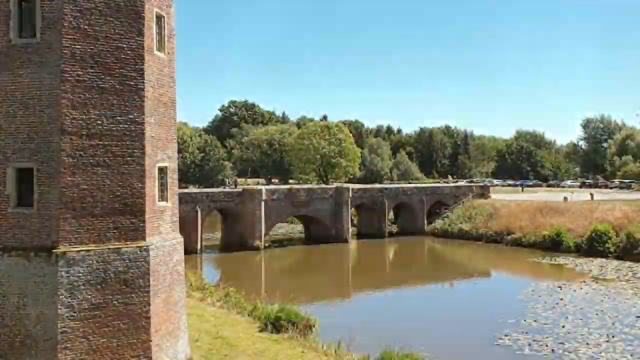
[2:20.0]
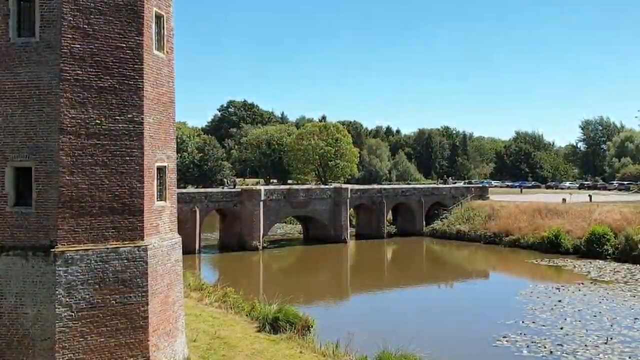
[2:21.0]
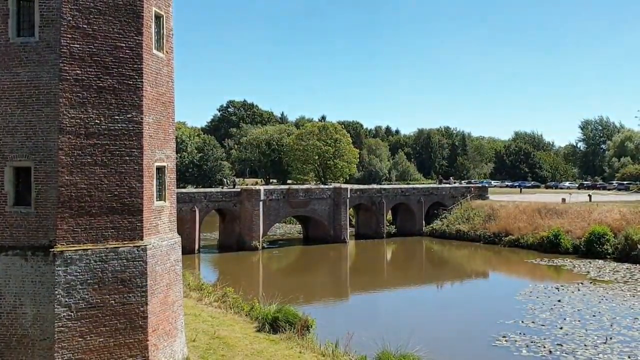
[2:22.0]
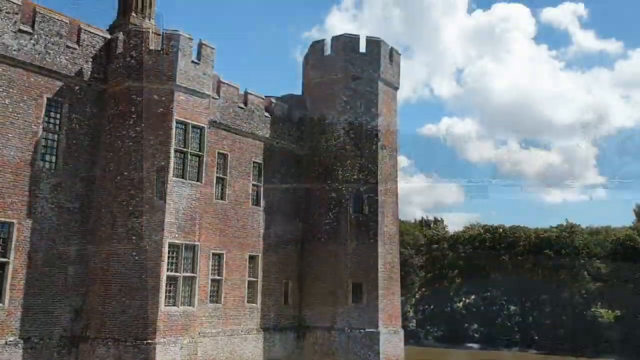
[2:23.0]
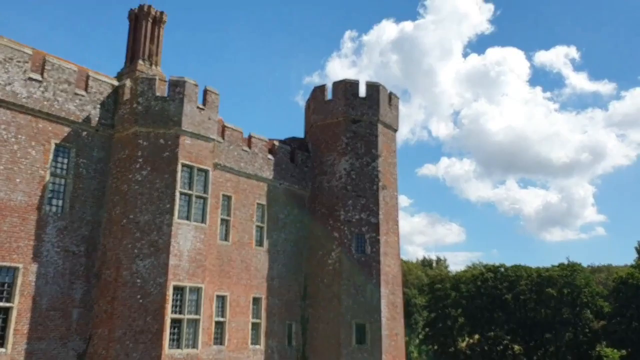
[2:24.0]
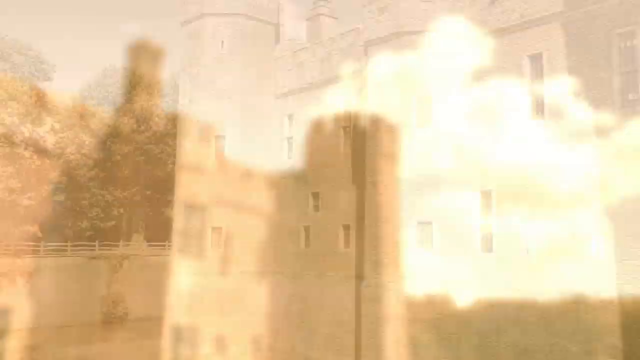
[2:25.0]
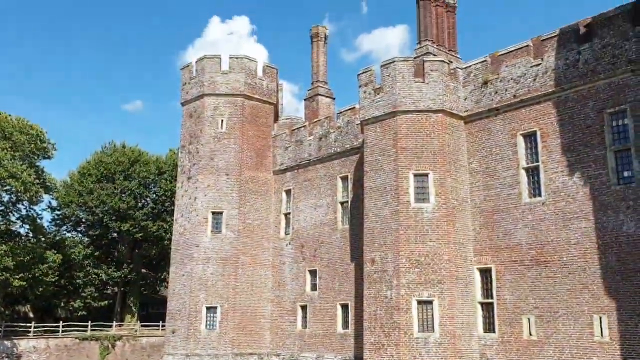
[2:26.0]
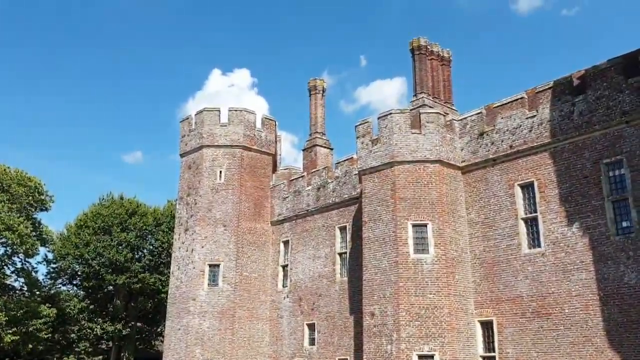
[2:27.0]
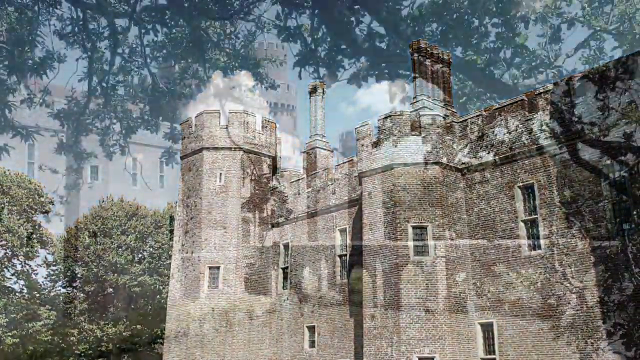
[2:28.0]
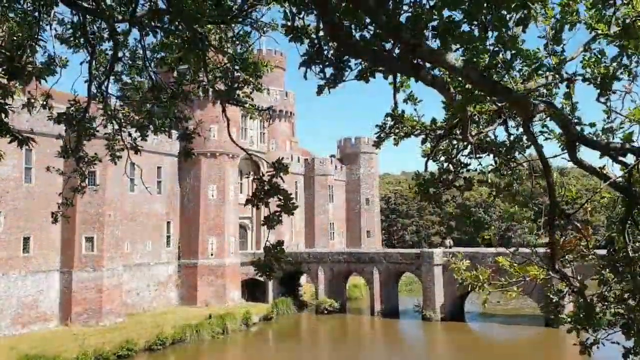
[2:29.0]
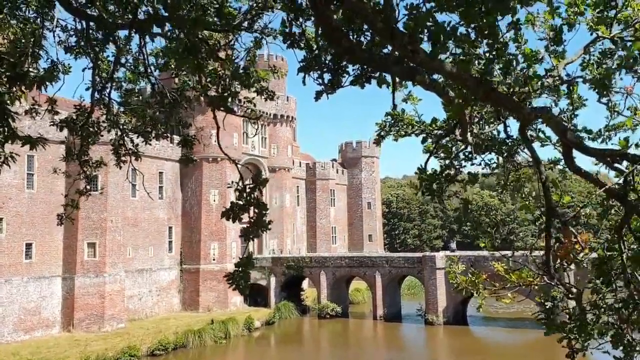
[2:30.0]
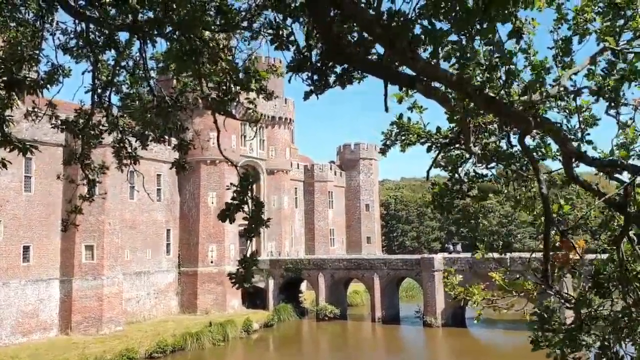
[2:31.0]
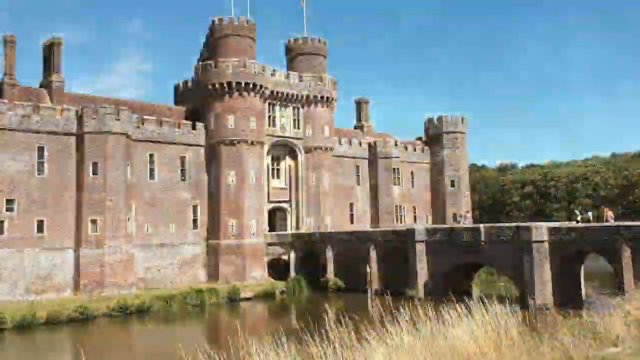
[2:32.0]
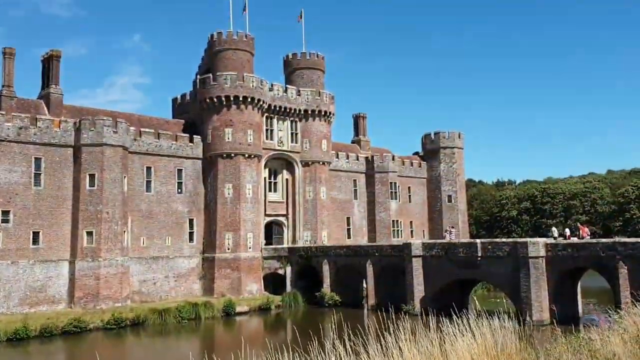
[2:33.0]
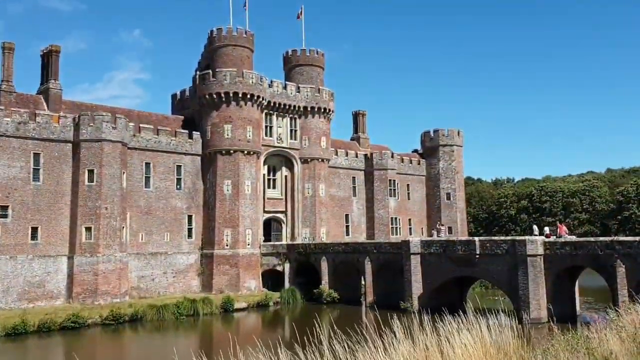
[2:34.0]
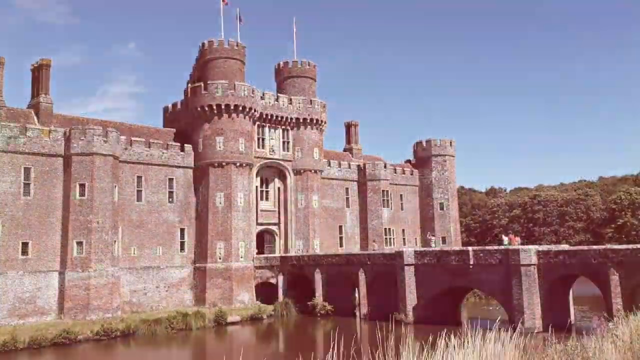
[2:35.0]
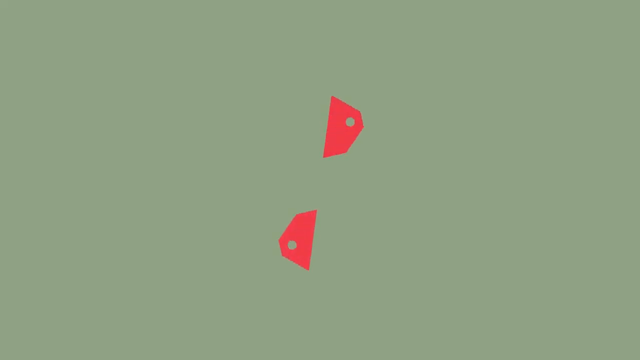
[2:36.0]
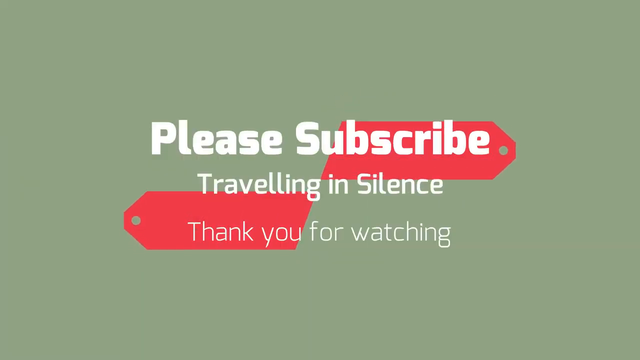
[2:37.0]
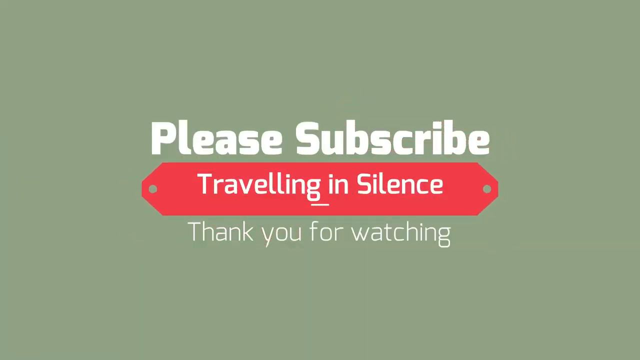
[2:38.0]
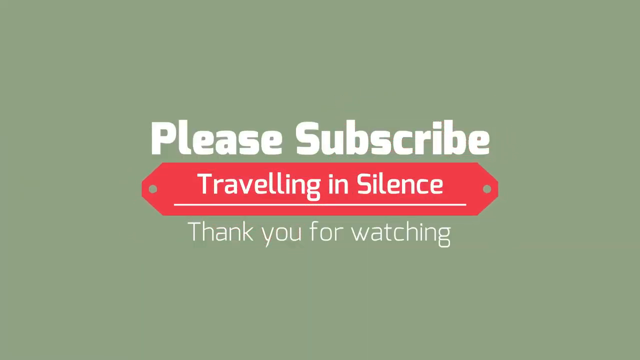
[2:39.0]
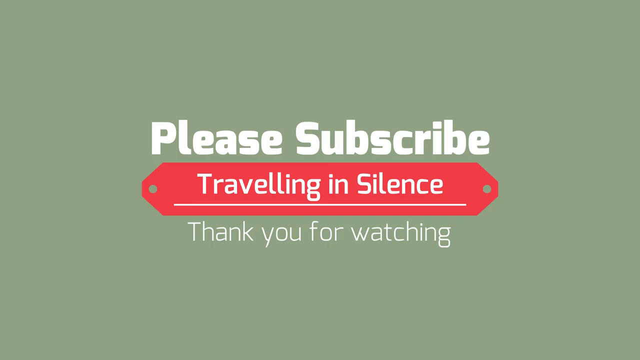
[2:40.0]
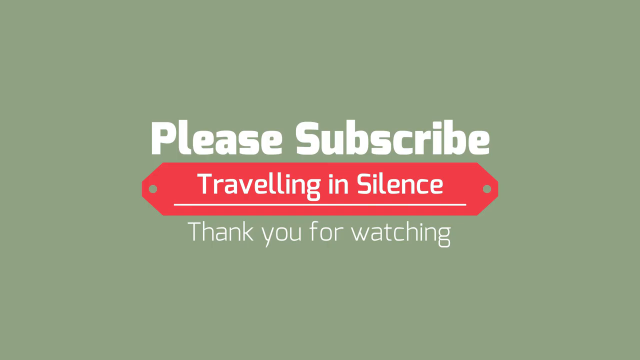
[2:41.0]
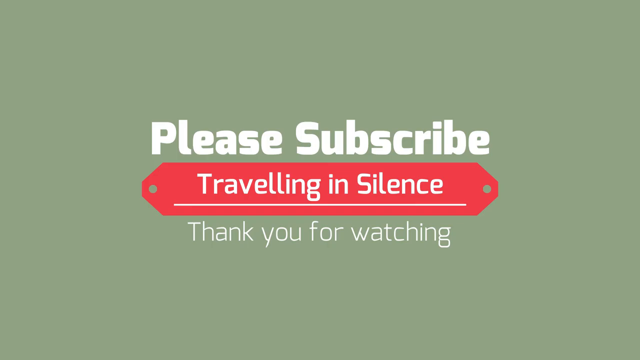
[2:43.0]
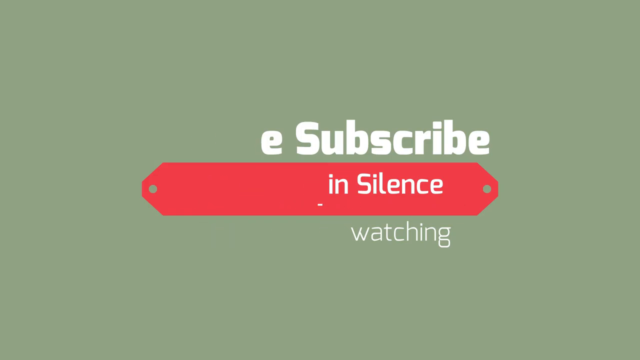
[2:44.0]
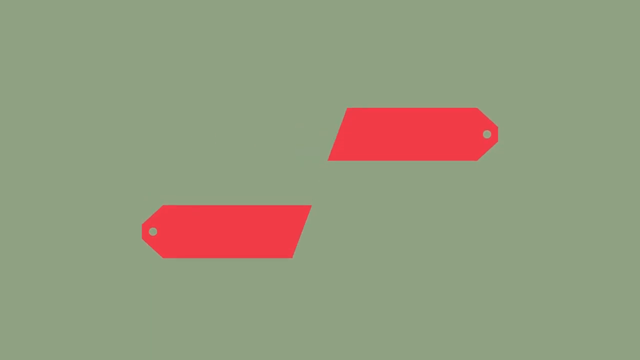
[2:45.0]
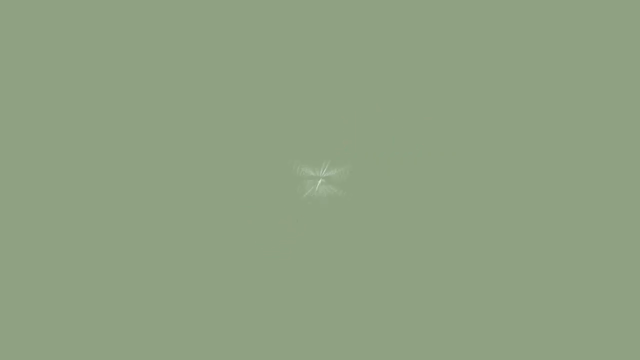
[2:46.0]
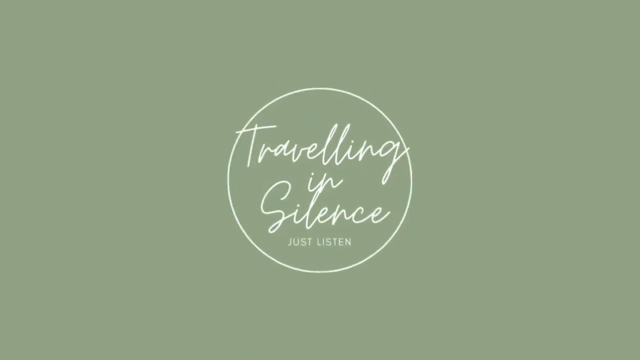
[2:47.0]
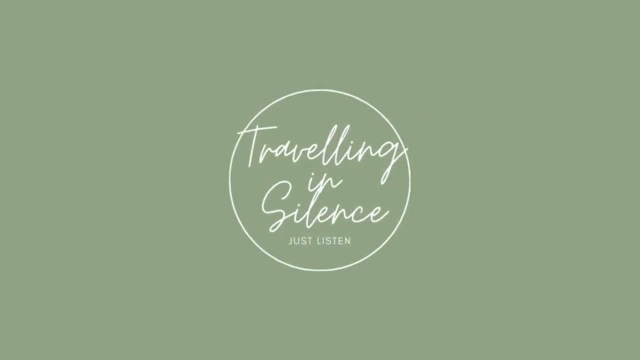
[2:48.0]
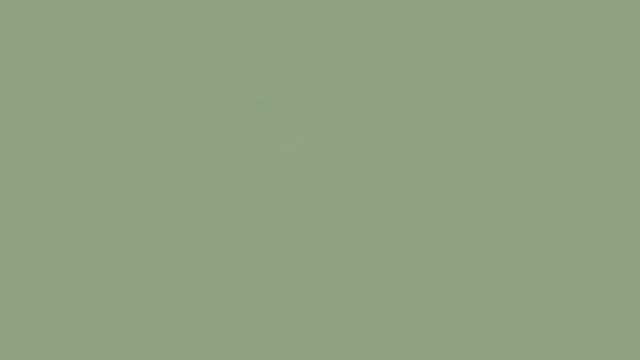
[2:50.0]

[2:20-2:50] The clock shows five to ten on a sunny summer's day. In one shot passing through the archway, the camera turns upside down. The footage goes to the woodland walk and ends with more shots, mostly exterior views of the castle and the moat from different perspectives, along with some different people. The people are in ordinary, modern summer clothes and look like day visitors to the castle. The final shots show the moat and the bridge and more scenes of the castle, with cars in the background, apparently in a car park.